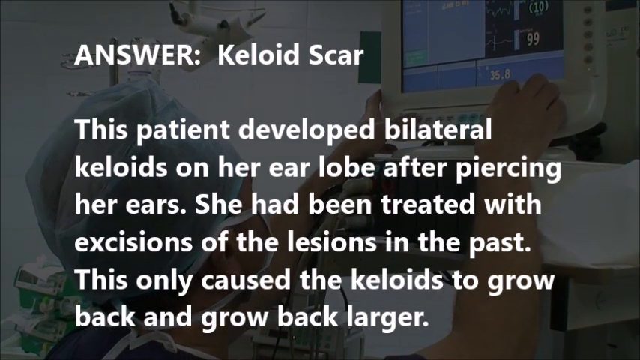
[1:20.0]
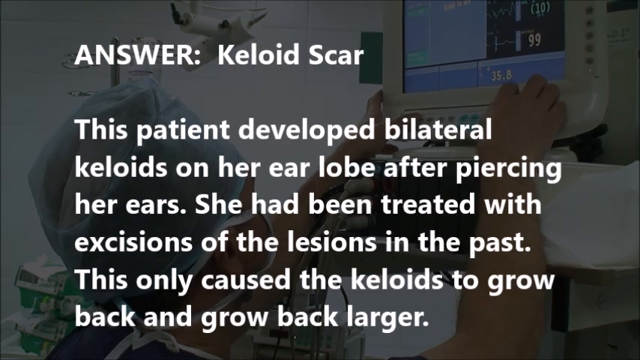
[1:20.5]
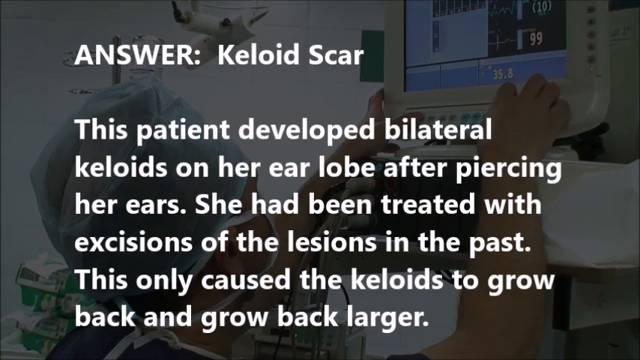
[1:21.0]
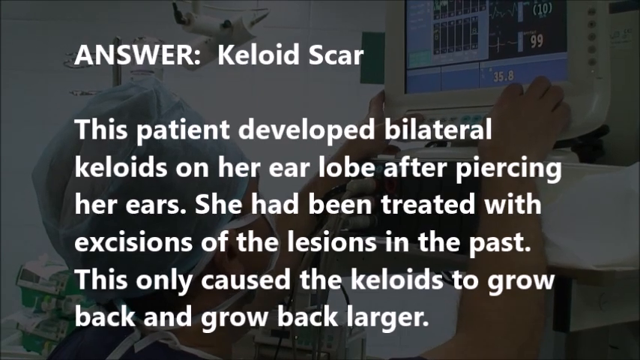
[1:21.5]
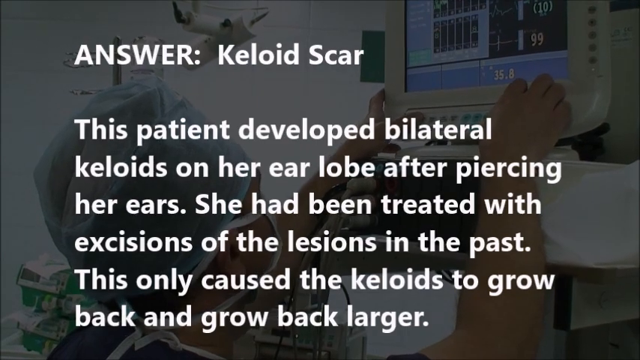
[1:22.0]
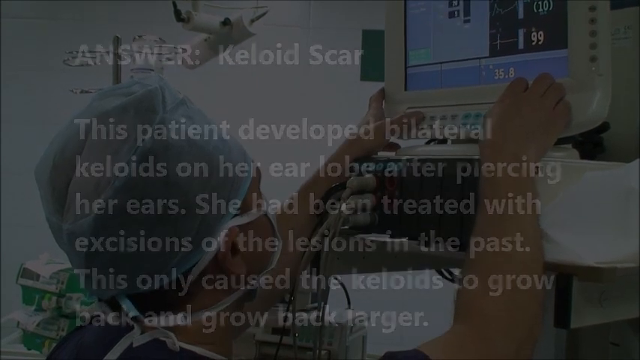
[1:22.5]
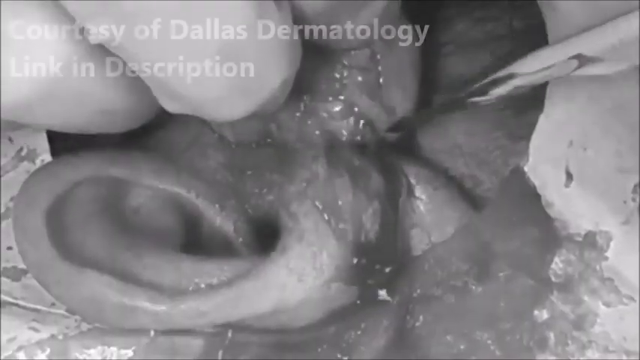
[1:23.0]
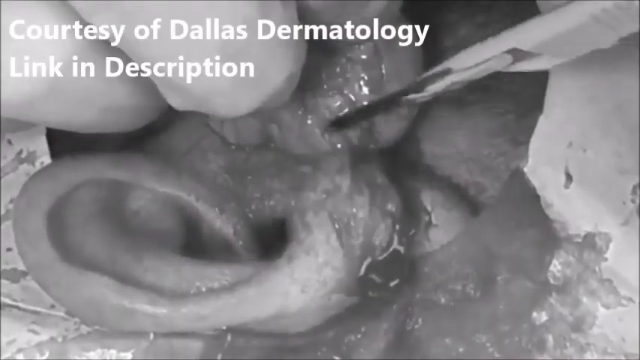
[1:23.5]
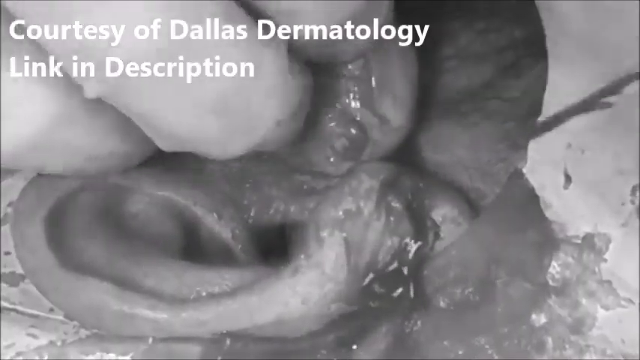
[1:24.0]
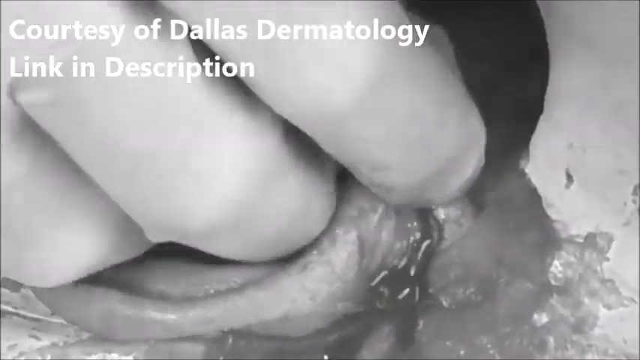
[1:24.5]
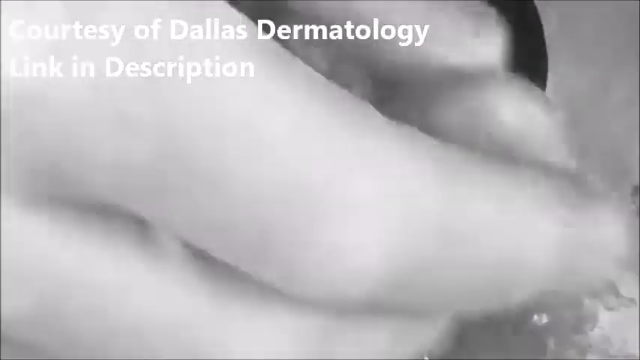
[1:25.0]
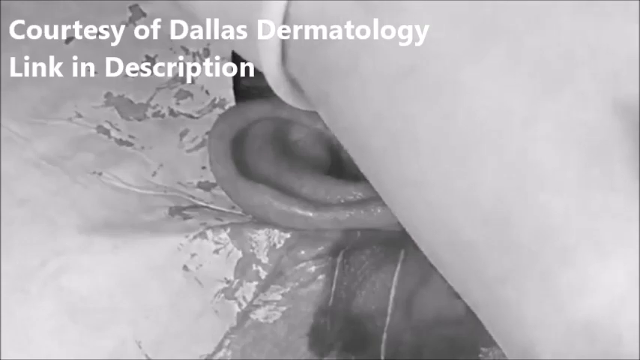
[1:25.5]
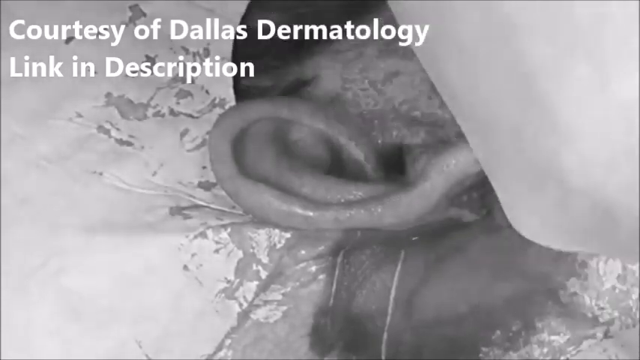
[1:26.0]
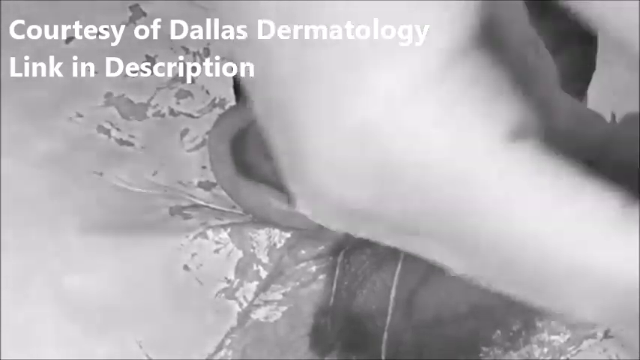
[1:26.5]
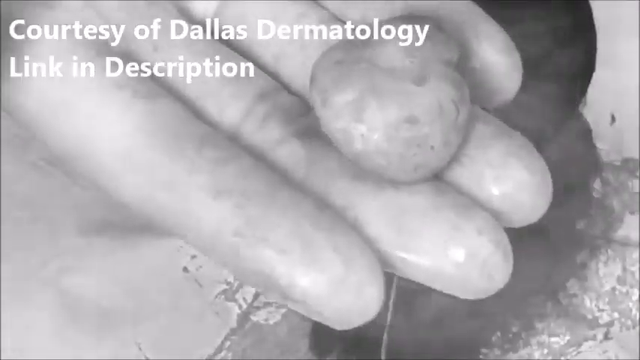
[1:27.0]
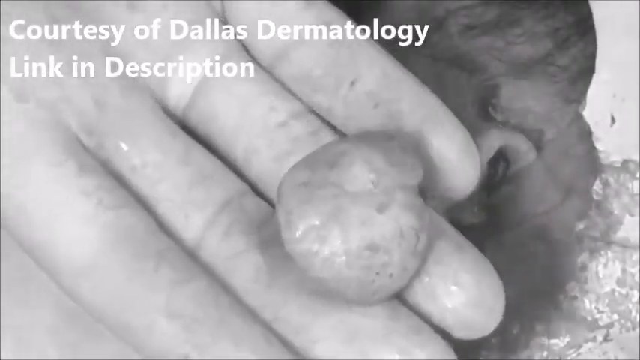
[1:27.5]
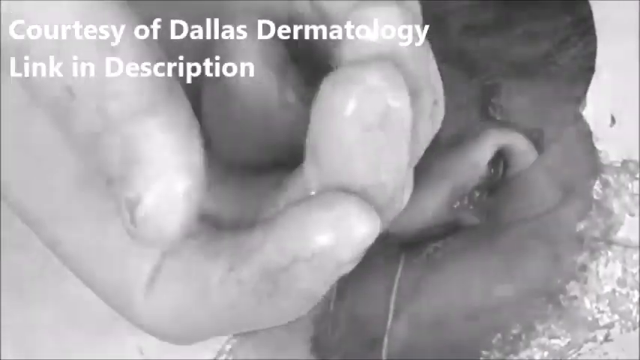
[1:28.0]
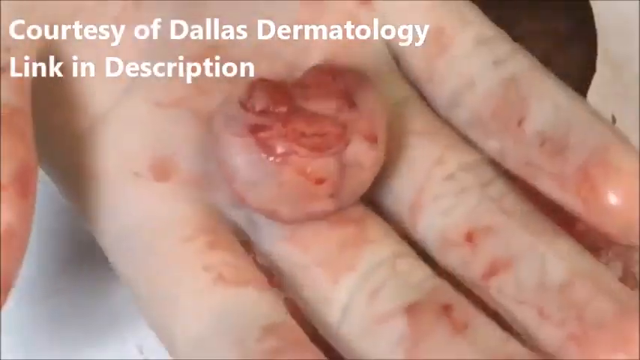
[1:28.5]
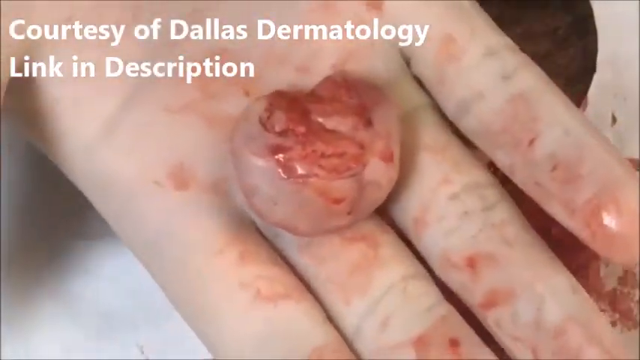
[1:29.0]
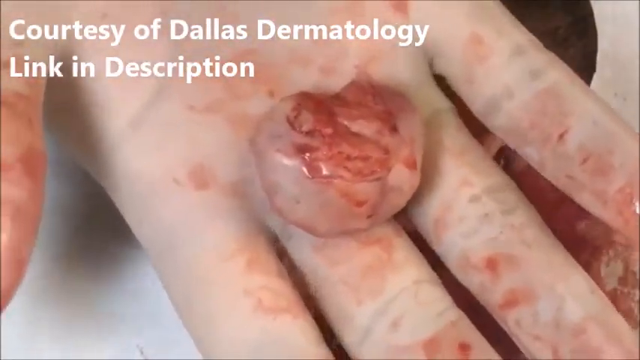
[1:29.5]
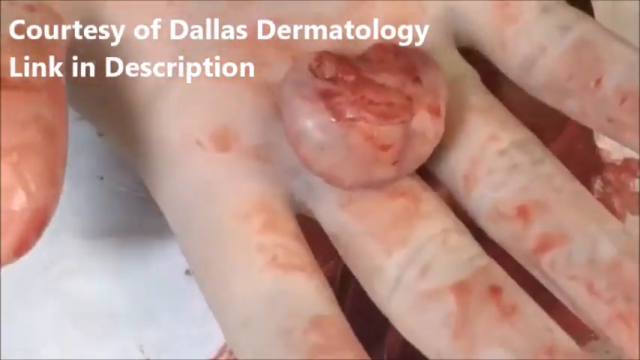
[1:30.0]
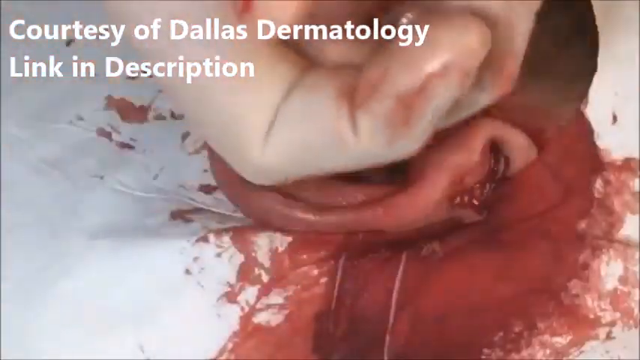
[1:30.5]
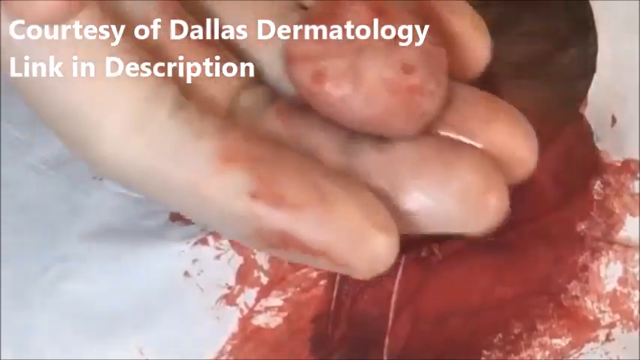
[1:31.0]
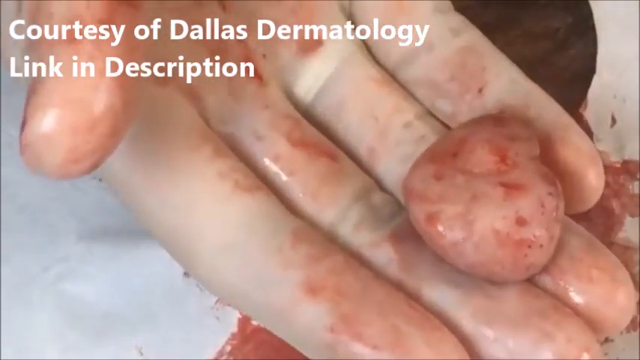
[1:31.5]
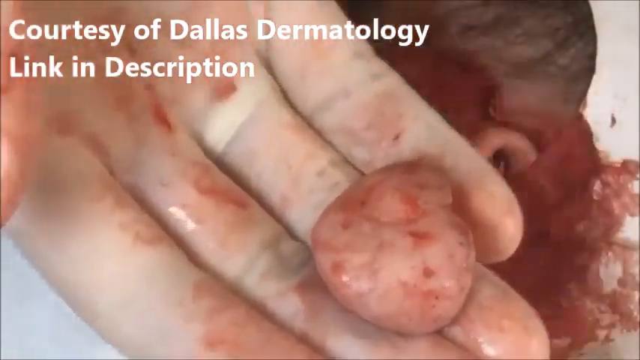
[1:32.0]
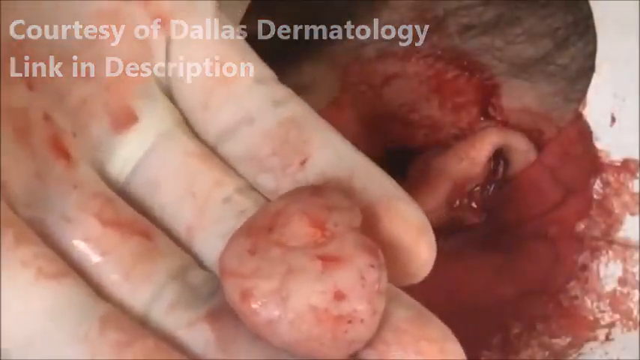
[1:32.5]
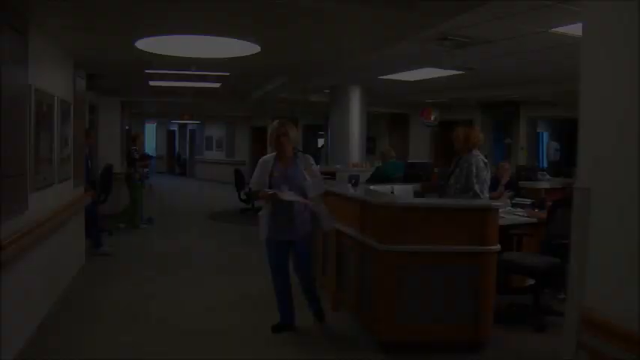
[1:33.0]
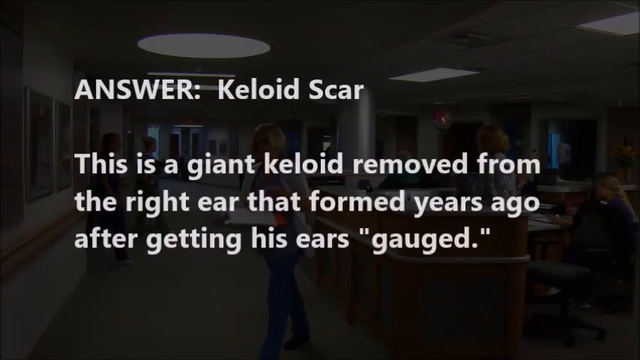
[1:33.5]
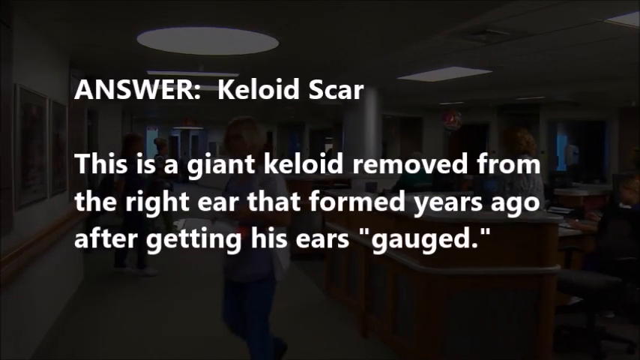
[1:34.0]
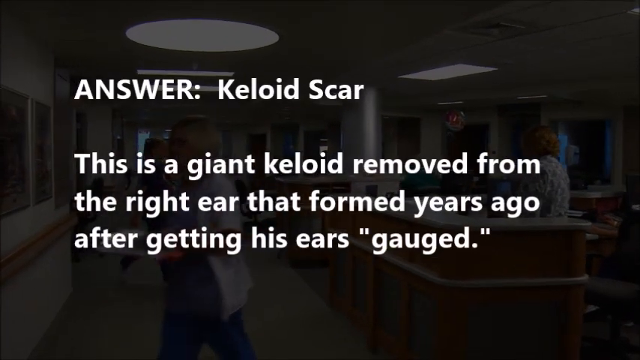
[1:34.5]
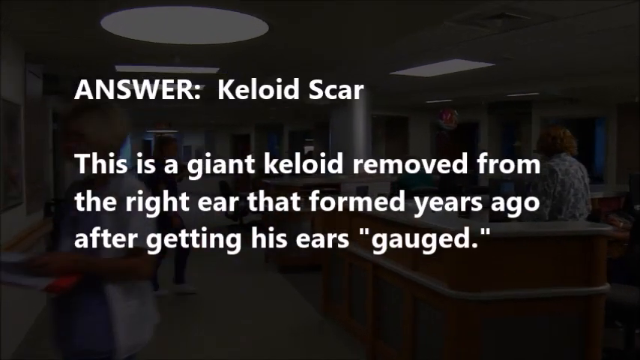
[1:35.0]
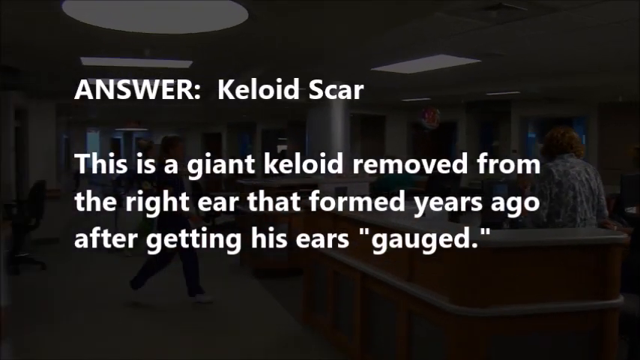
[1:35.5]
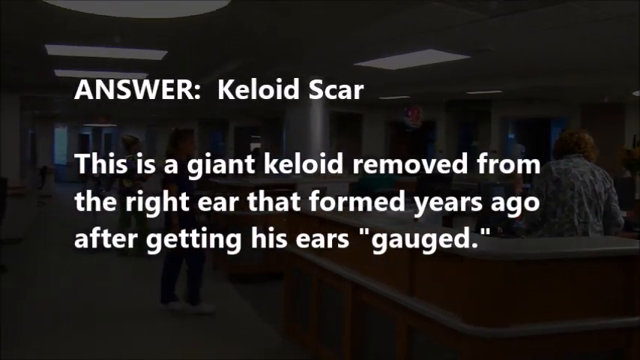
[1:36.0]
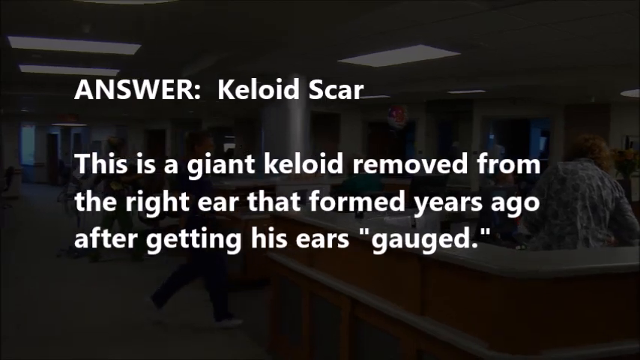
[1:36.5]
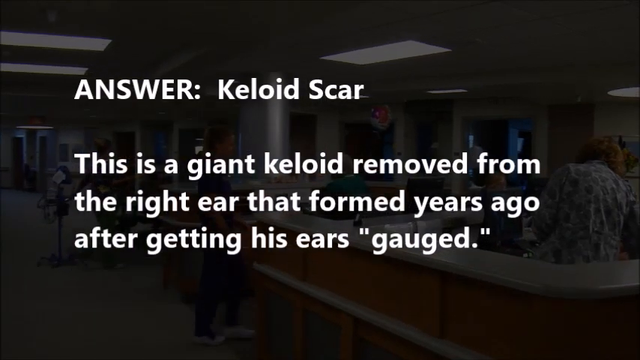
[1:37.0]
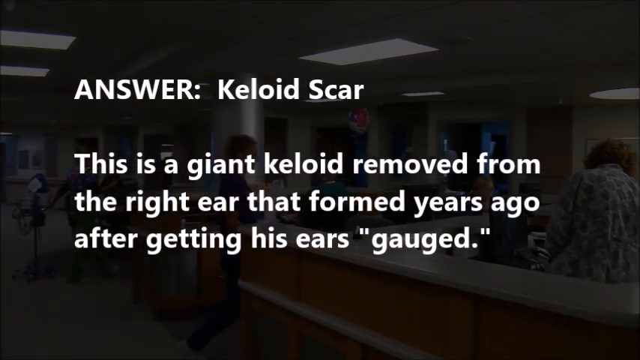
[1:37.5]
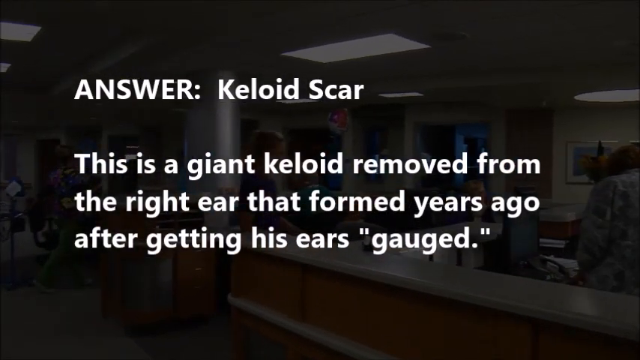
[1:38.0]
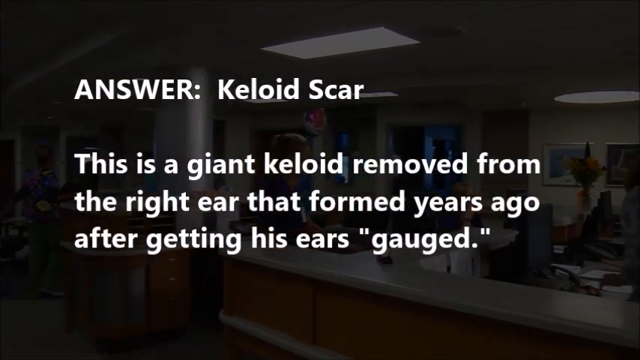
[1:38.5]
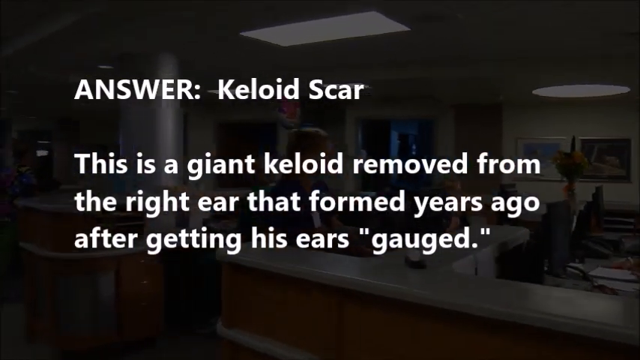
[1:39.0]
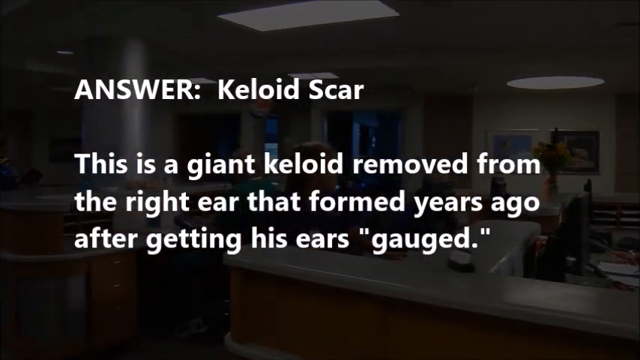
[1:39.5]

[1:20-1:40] The keloid scar description is followed by a close-up of surgery near someone's ear, credited to Dallas Dermatology. An ear is in the bottom left of the screen, and towards the top left a surgeon's scalpel makes cuts into the ear. It looks as though the earlobe was fixed to some skin above in a bent position, and the scalpel releases the earlobe at the bottom. The surgeon's gloved hand then reveals a keloid scar, a bulbous mass about two finger widths in size; it is not circular overall but is circular in one part, with an additional lump at the top. The surgeon turns the lump over, showing where the cut was made, with the cut skin exposed on the lump. The person's ear is visible beneath the surgeon's hands, and there is quite a lot of blood on the ear and on the material surrounding the person's head. An information page then reads "answer Keloid scar. This is a giant Keloid scar removed from the right ear that formed years ago after getting his ears gauged." In the background of this page is a hospital reception area with staff walking around, a reception desk or nurses' station, and a doctor approaching and sitting down.